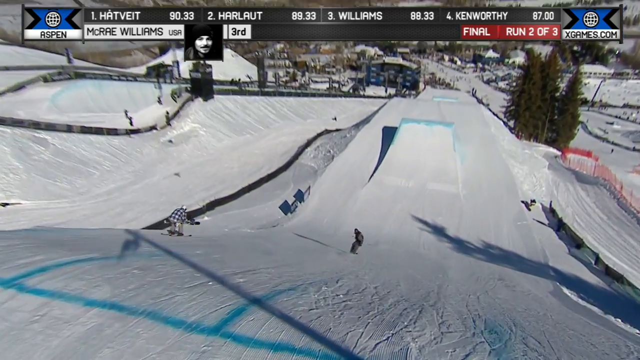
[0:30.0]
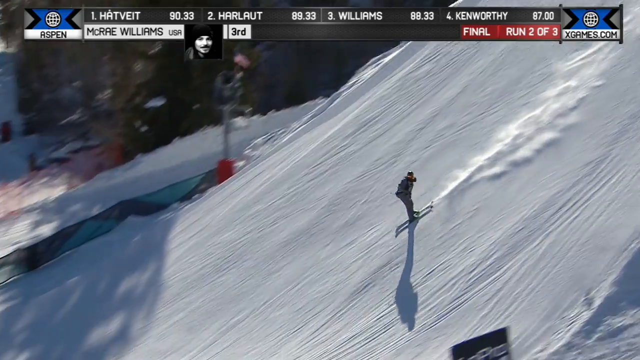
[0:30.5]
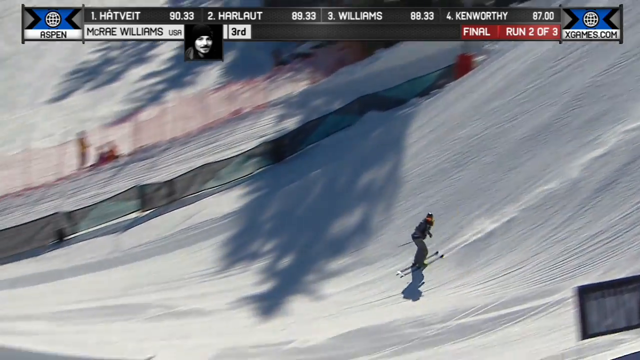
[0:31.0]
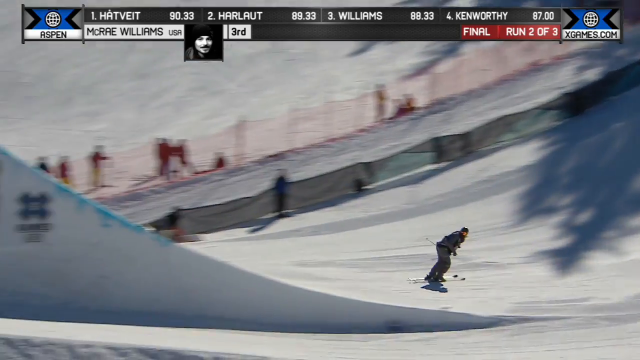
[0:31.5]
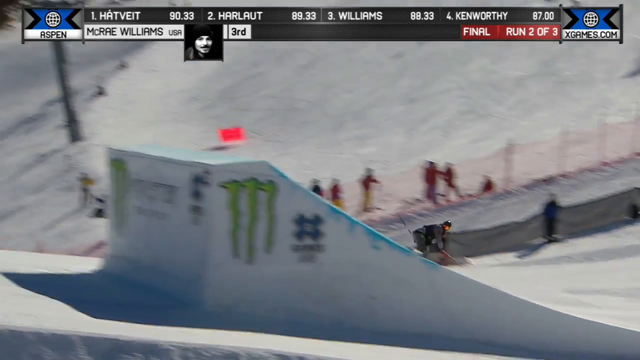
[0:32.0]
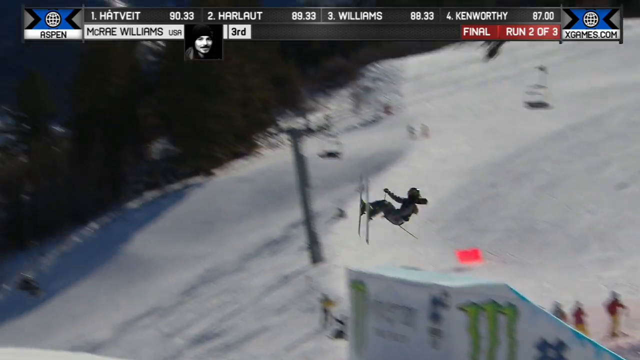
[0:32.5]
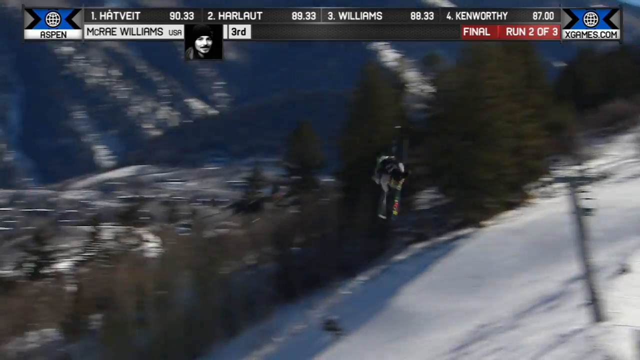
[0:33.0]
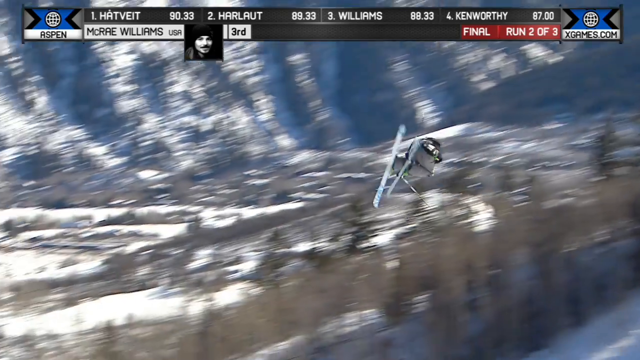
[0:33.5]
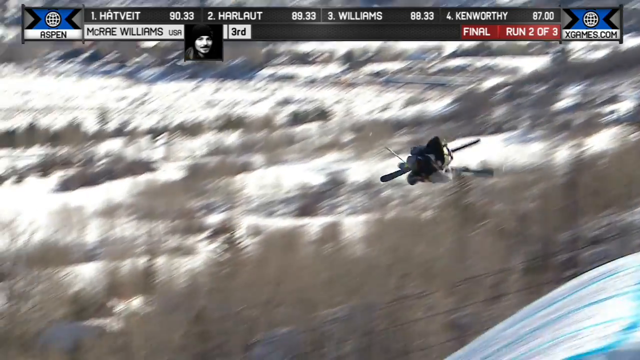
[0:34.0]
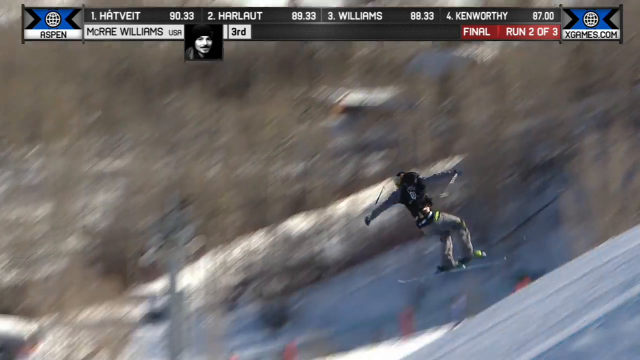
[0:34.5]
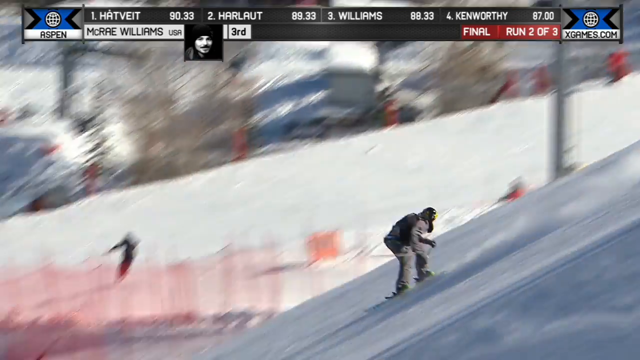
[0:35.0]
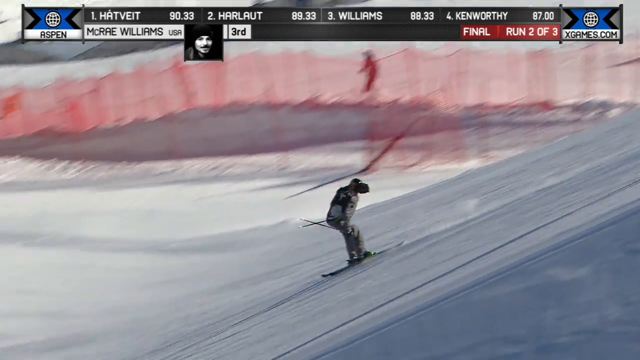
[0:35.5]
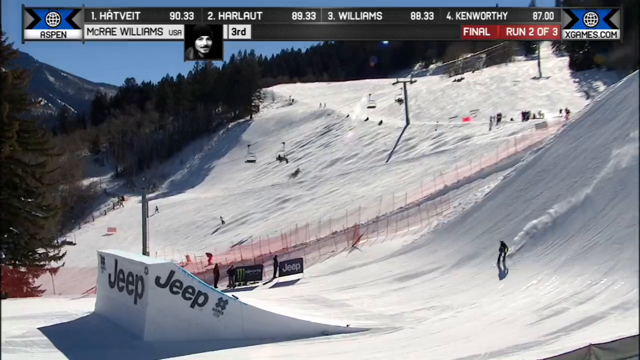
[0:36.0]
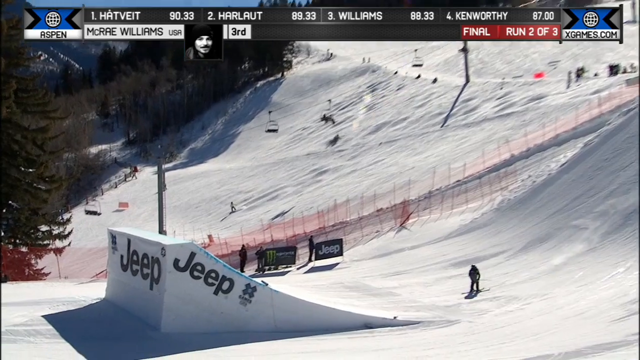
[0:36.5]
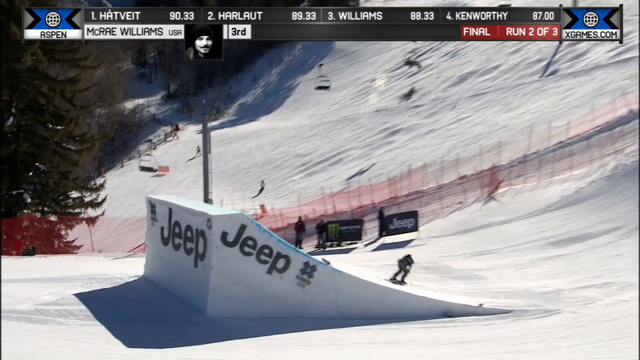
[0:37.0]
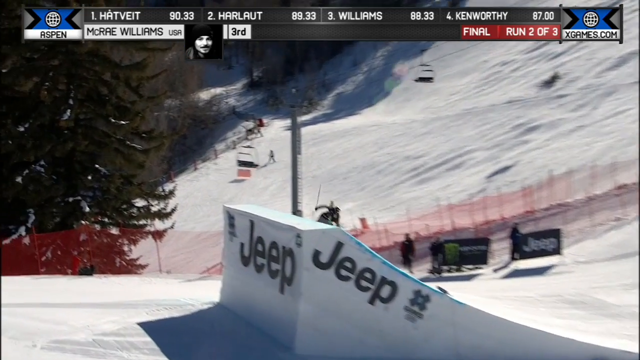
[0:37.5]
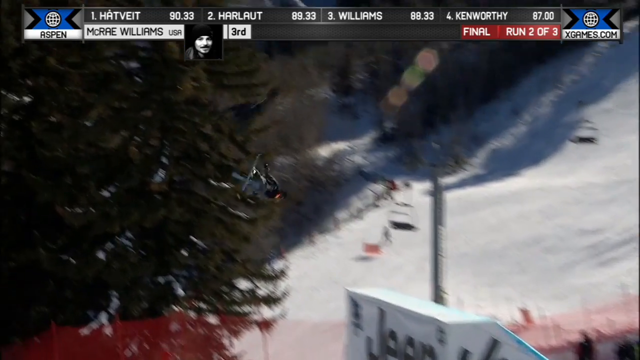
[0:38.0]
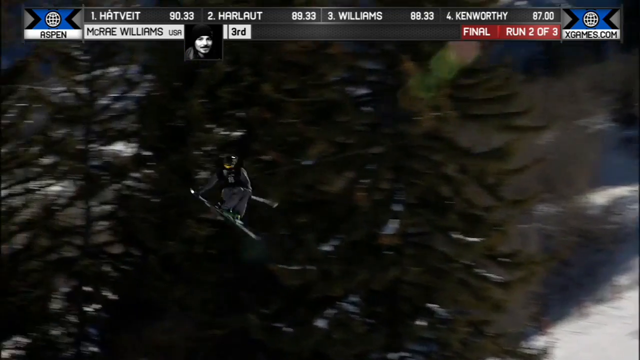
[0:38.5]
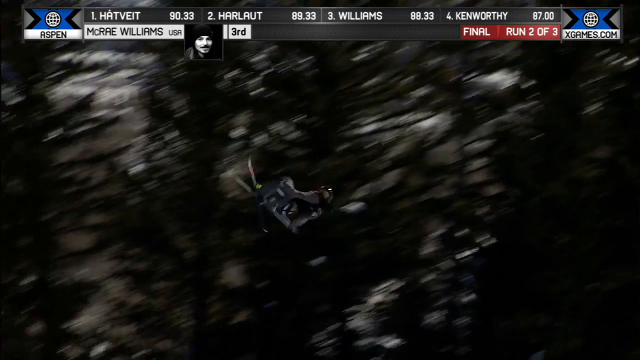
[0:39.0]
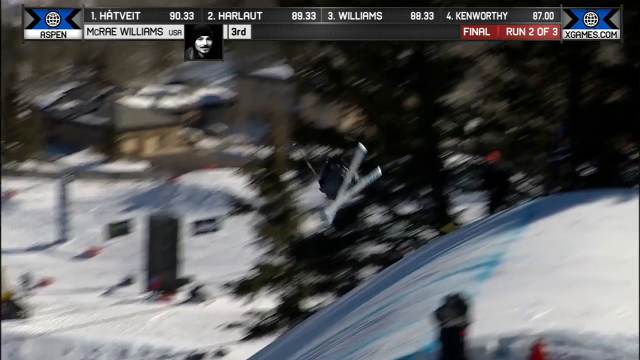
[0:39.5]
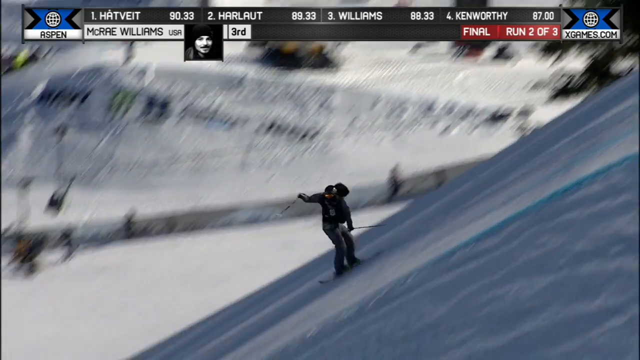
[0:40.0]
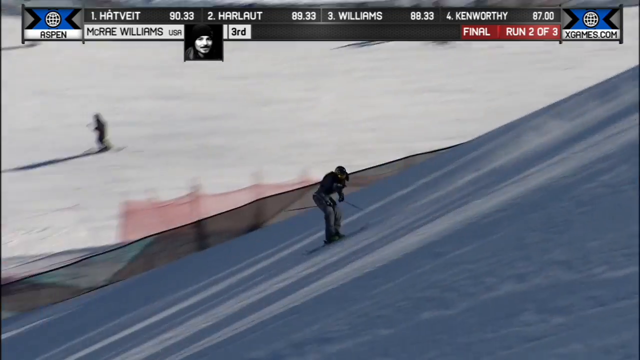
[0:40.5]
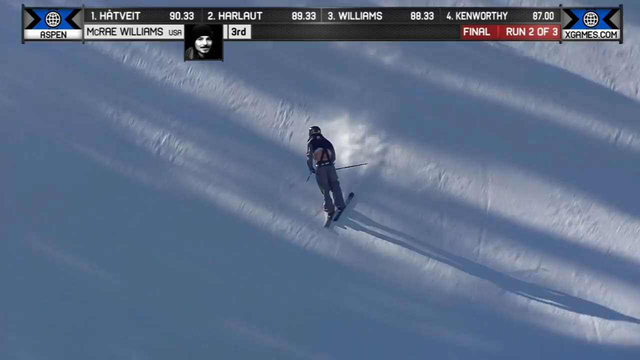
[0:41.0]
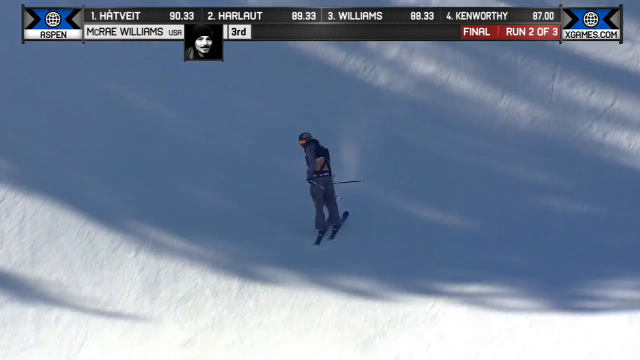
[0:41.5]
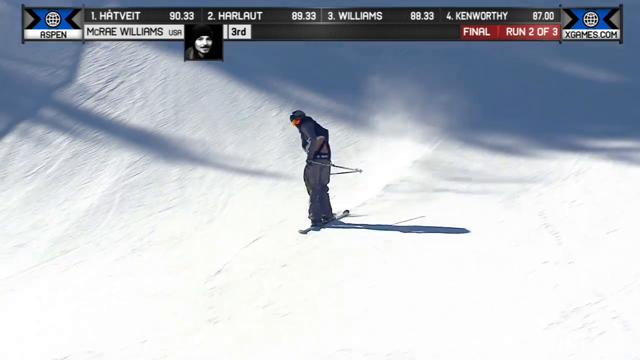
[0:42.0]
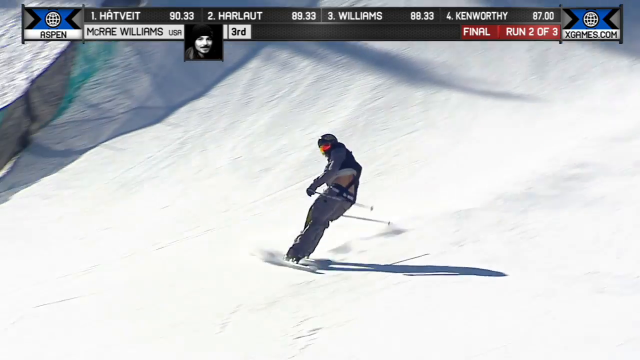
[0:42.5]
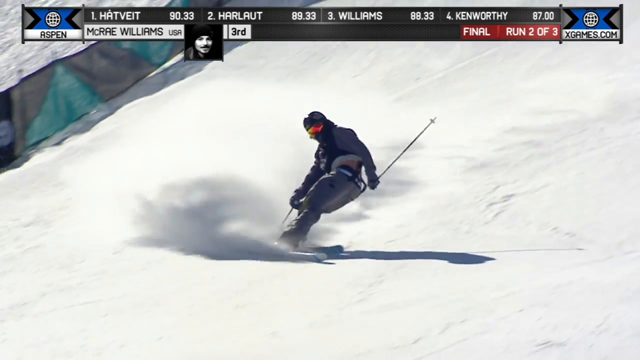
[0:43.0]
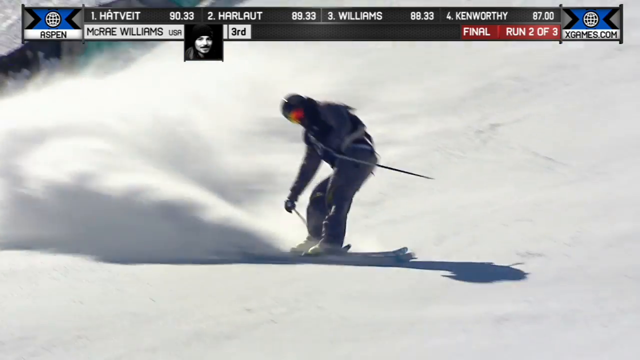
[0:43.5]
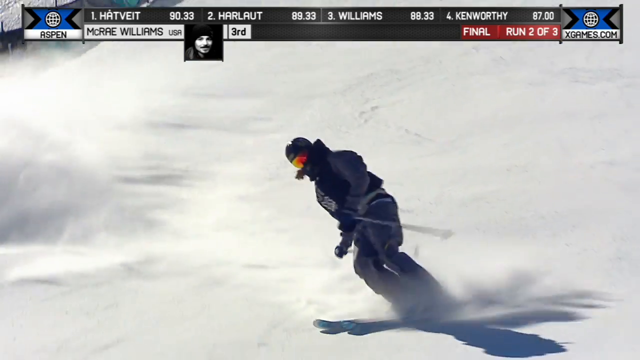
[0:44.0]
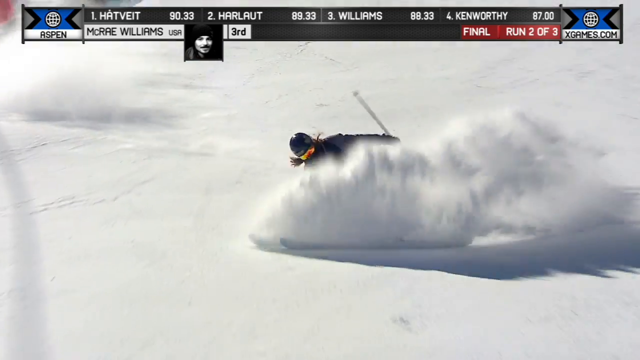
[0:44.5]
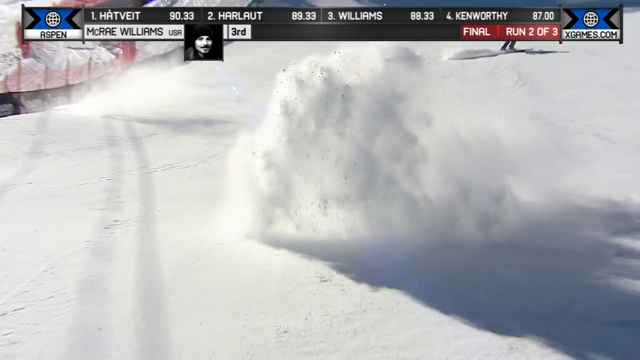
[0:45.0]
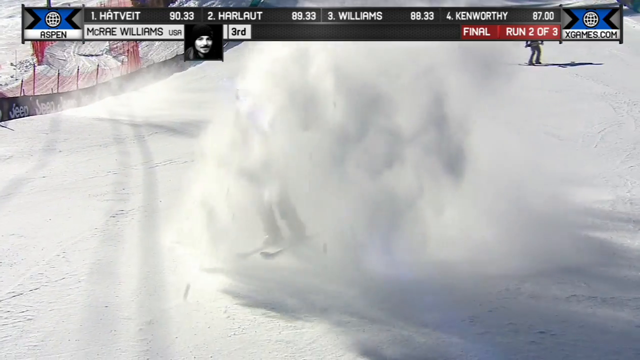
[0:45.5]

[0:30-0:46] At an X Games skiing competition, a skier in a black ski suit, black pants, a black helmet and yellow opaque goggles skis down the slope facing backwards, not looking where he is going. He skis backwards up a large ramp bearing the Monster Energy Drink logo, flies off it, and does three full 360-degree somersaults in midair before landing back on the slope, still skiing backwards. He goes up another ramp, does multiple flips in the air, and lands perfectly on his skis, again facing backwards as he skis down. He then turns and kicks up a lot of snow in front of him. Red fences line the sides of the slope to keep the skiers from going too far off course, and very tall, snow-covered pine trees surround the track.